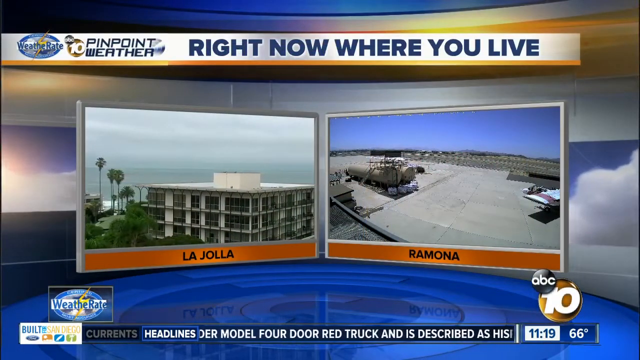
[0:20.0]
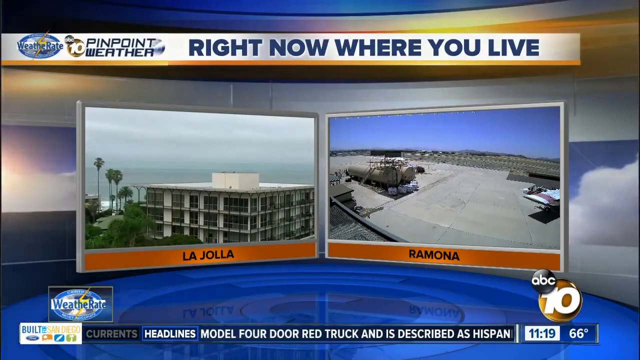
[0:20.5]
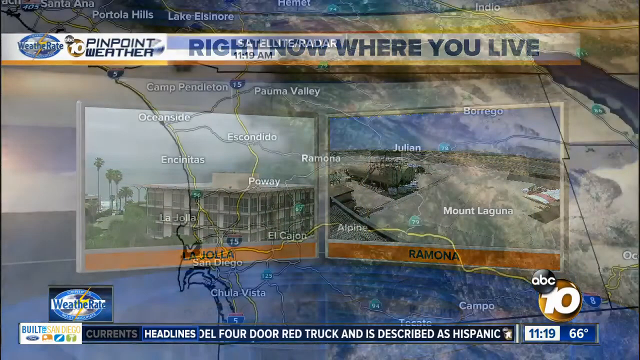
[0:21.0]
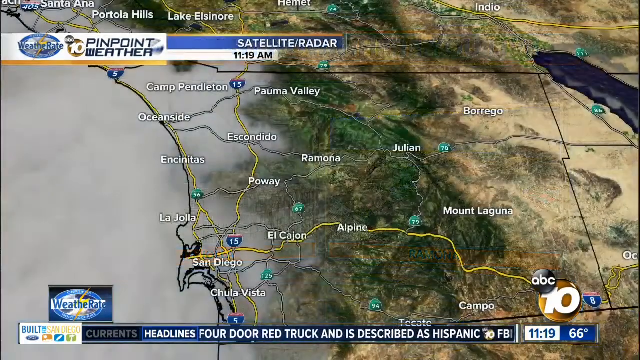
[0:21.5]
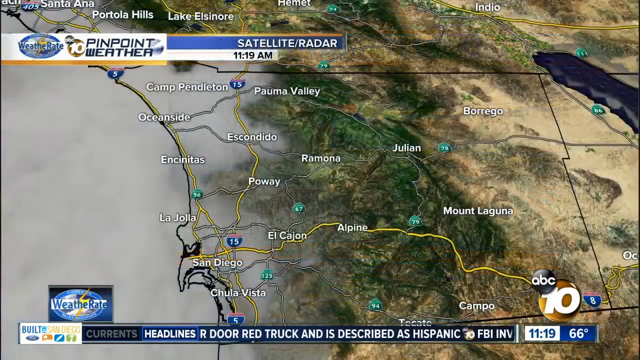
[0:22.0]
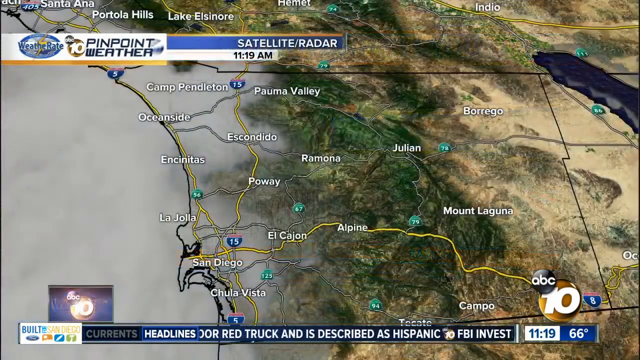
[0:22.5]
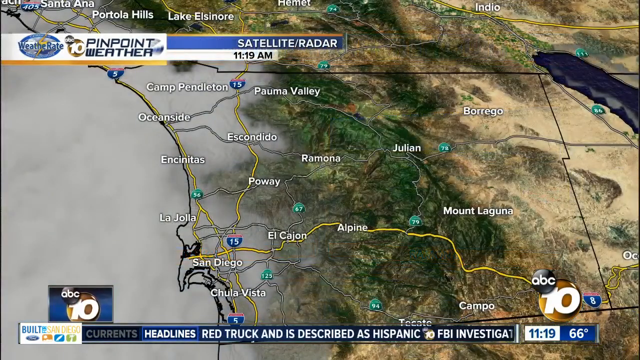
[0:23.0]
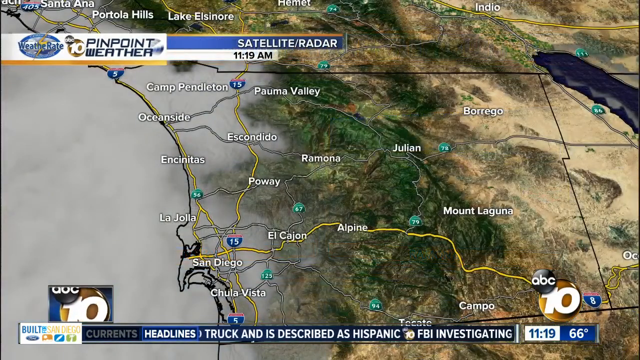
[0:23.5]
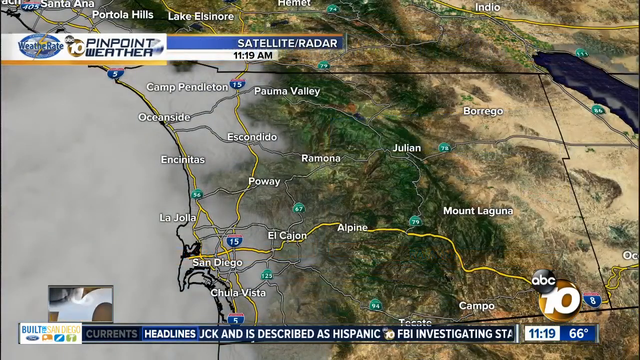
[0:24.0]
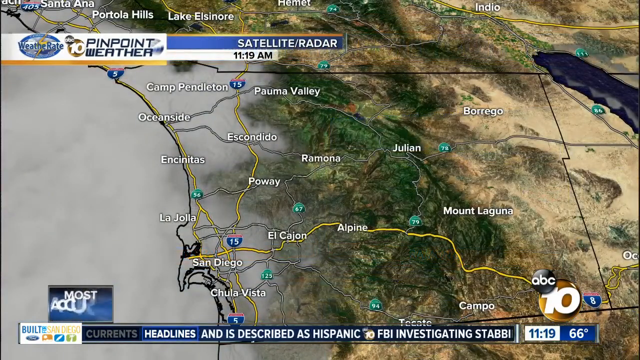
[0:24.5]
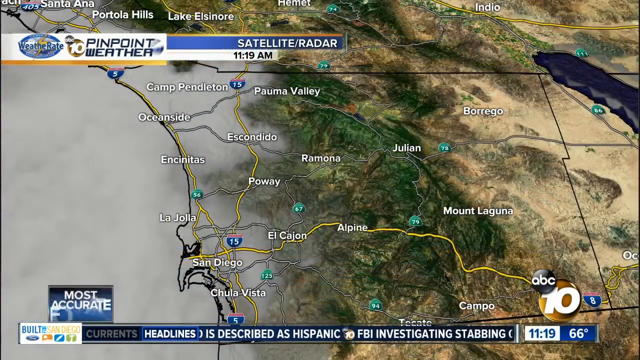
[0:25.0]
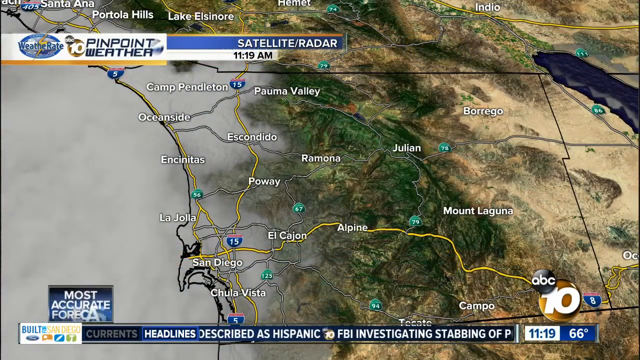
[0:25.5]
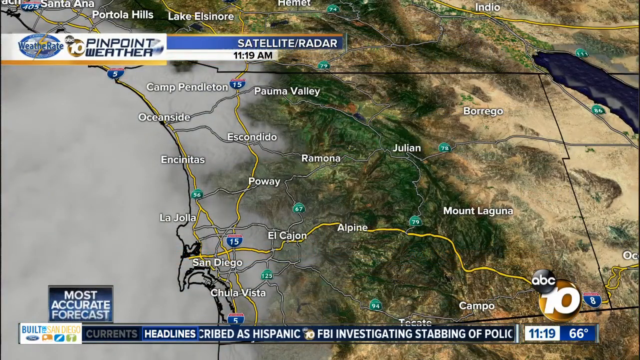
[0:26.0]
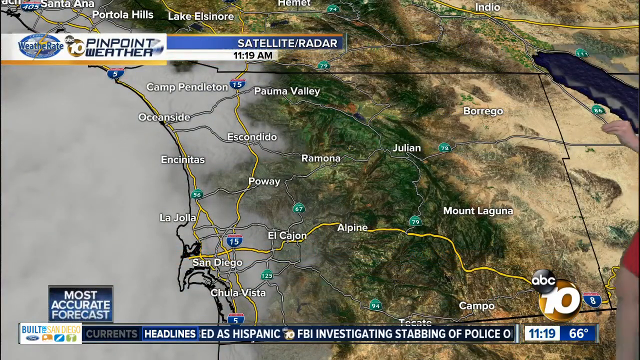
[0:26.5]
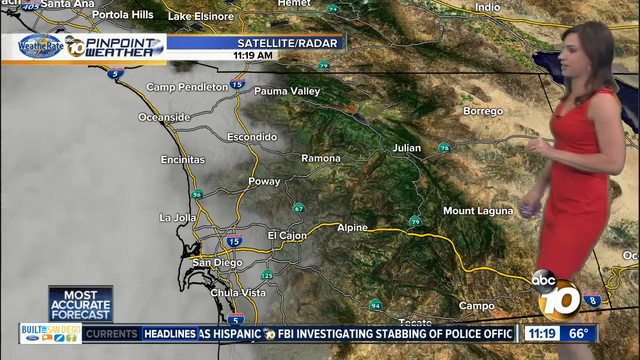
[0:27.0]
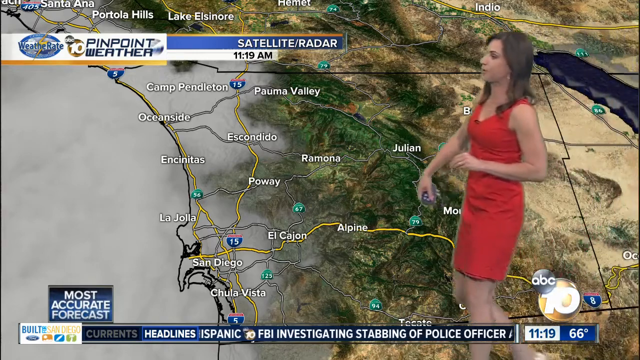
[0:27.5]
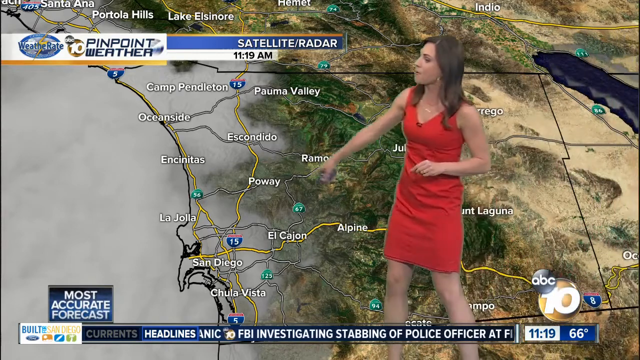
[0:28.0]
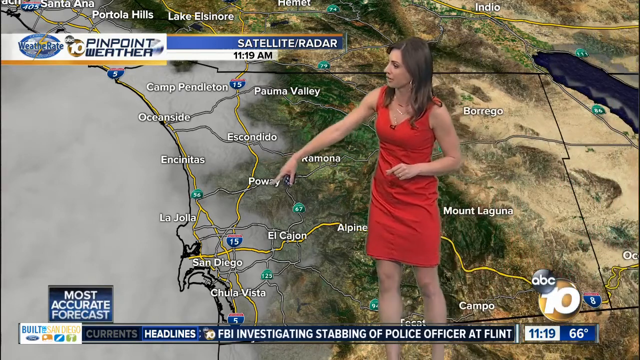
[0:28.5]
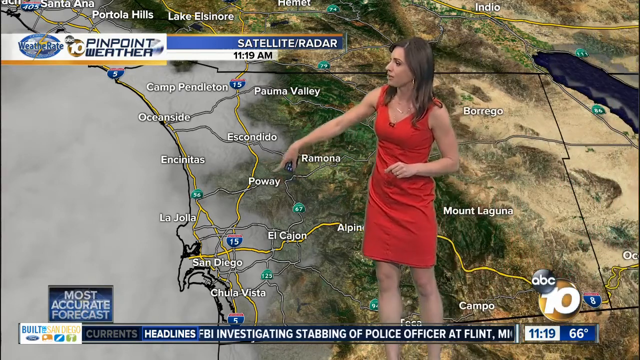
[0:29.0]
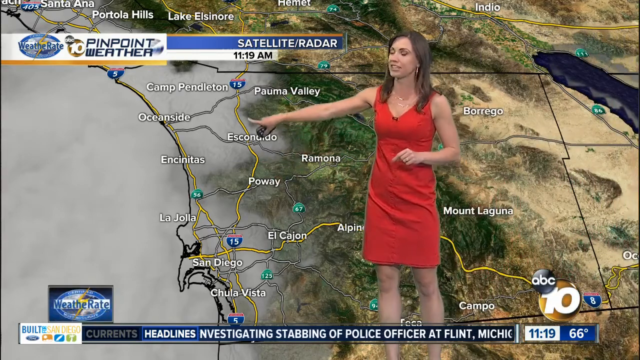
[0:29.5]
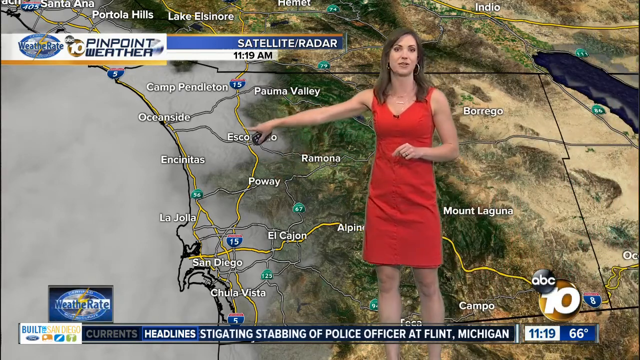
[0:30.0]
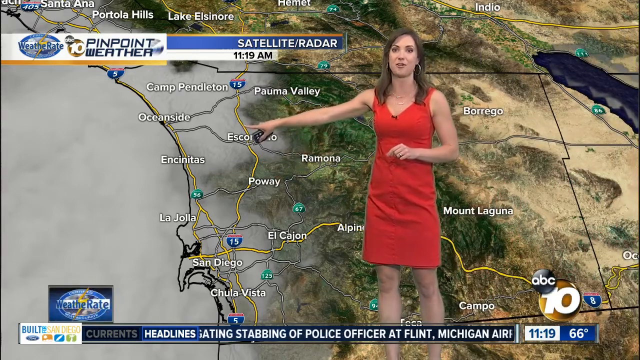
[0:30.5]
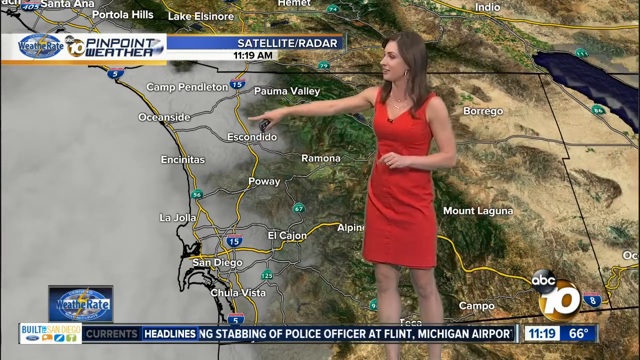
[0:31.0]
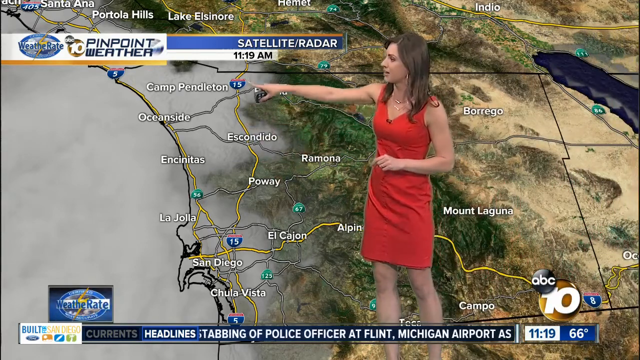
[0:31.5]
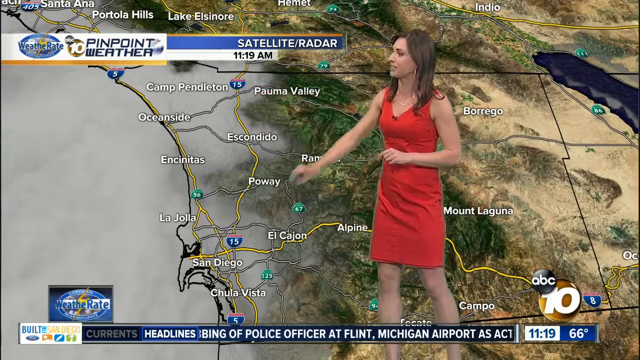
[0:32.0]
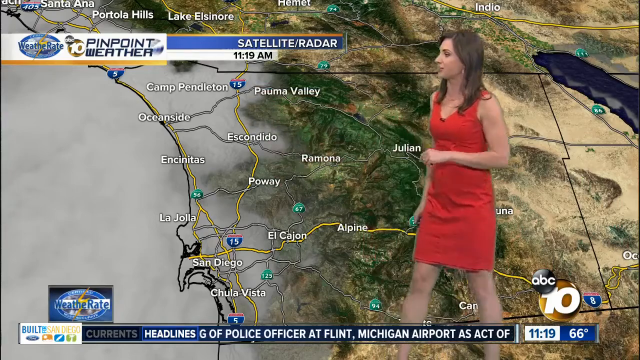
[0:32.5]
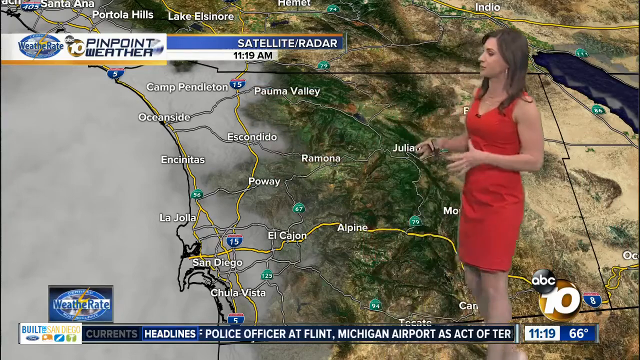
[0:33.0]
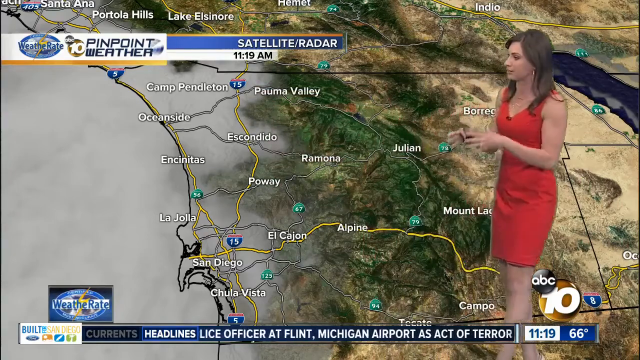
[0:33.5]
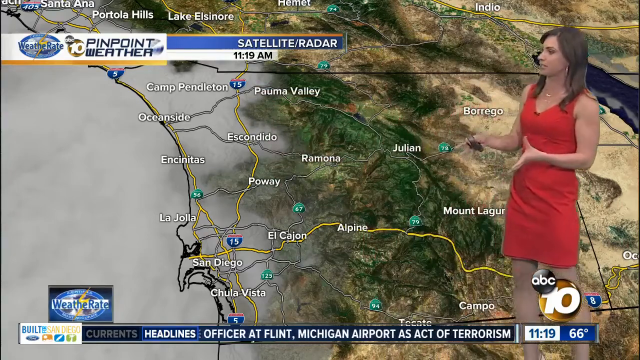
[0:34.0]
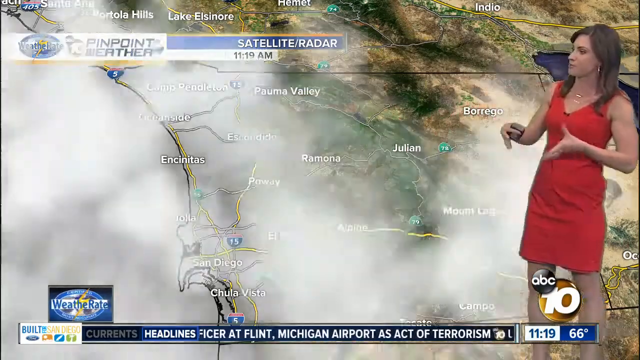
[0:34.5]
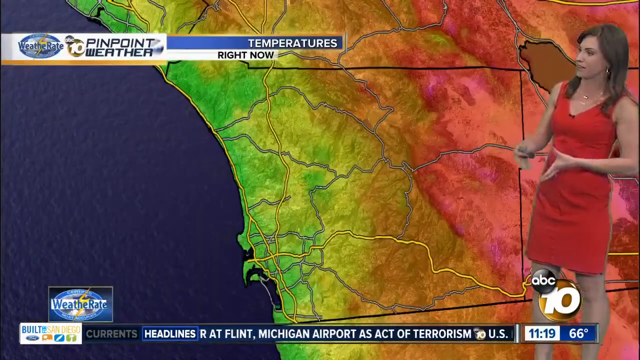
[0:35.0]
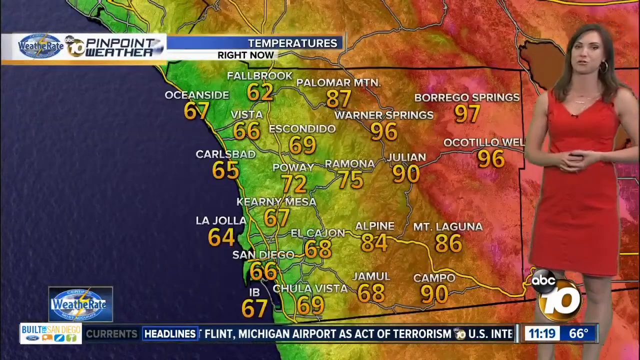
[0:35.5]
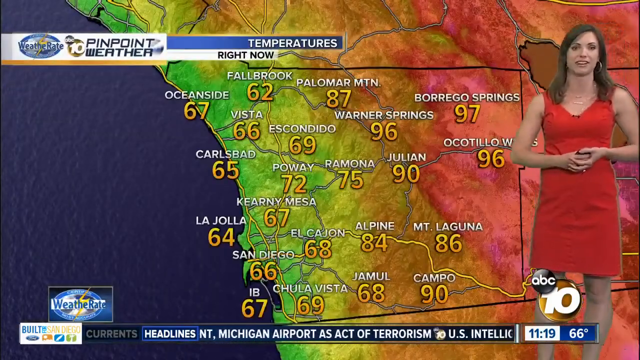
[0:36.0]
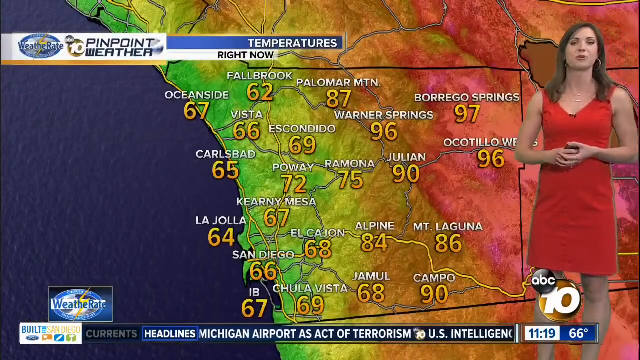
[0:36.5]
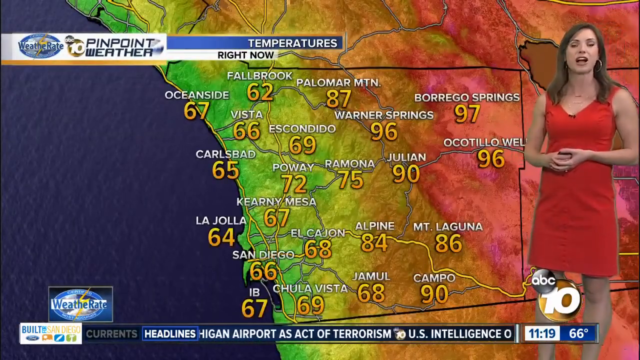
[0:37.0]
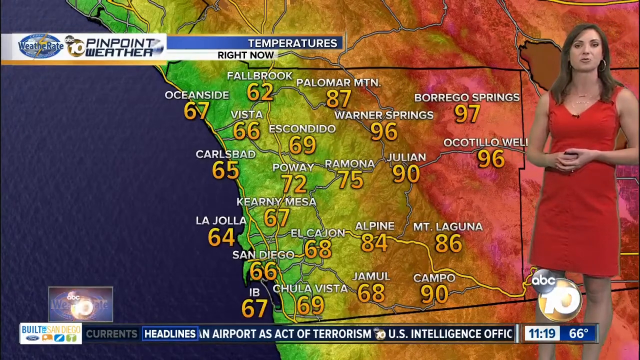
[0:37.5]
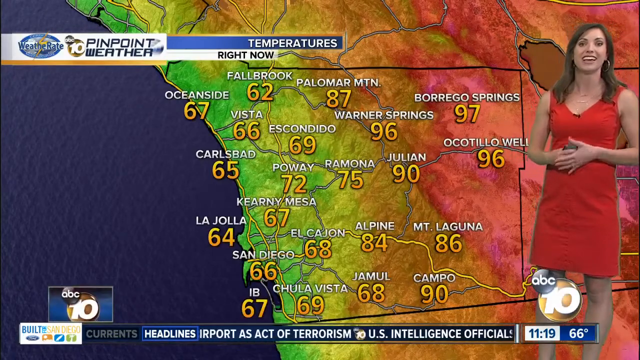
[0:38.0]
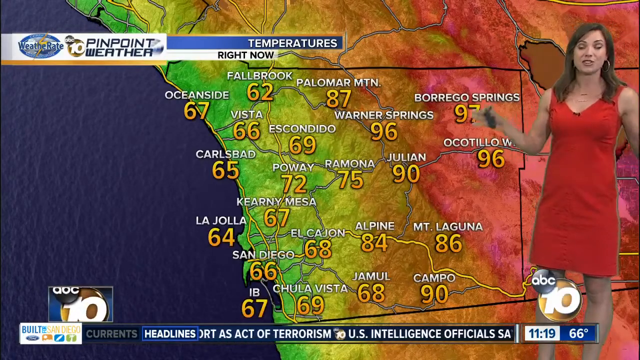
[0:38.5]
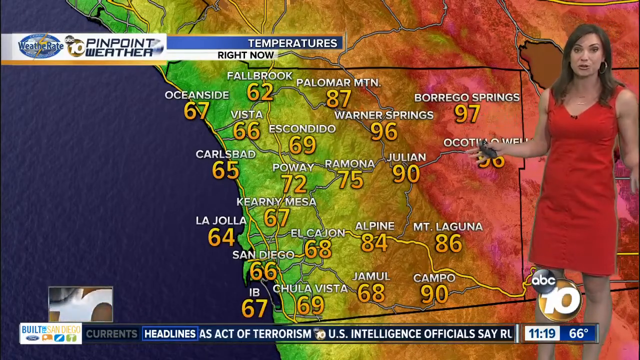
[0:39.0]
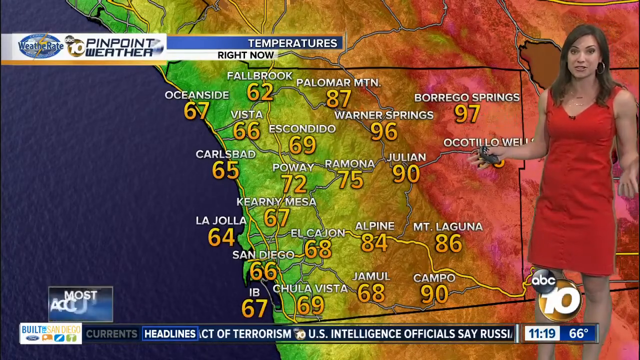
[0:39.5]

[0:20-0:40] The presenter shows weather conditions for many cities, including Poway, El Cajon, Alpine, Mount Laguna, Oceanside at 67, La Jolla, San Diego, Chula Vista, Escondido, Puma Valley, Julian, Borrego, Fallbrook and Warner Springs. The caption "right now where you live" is on screen.